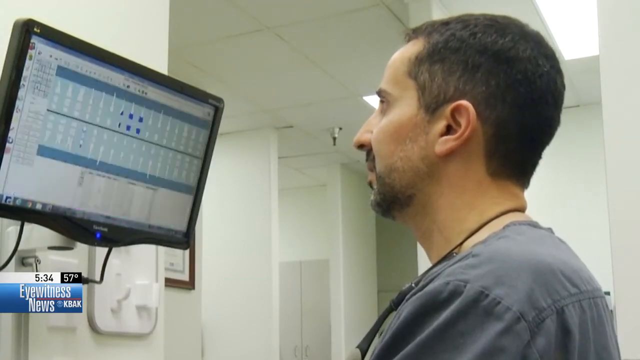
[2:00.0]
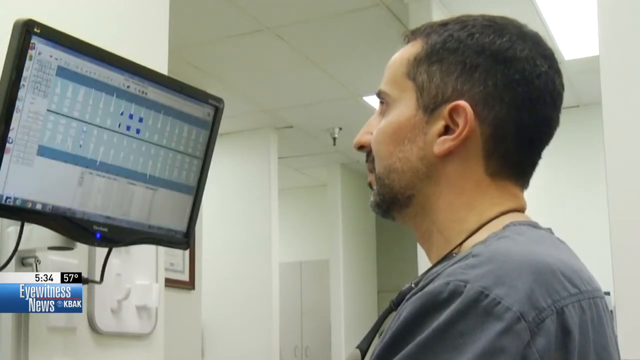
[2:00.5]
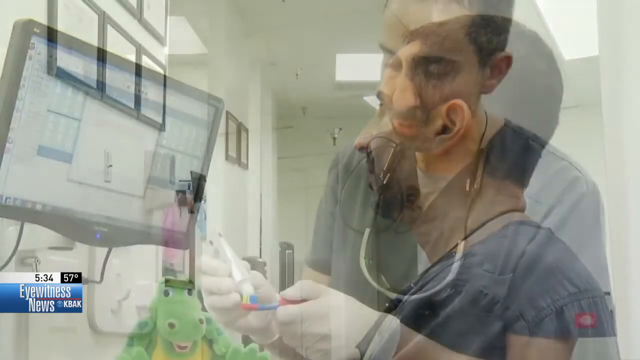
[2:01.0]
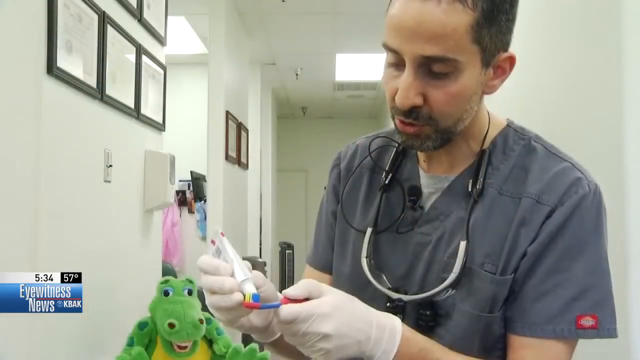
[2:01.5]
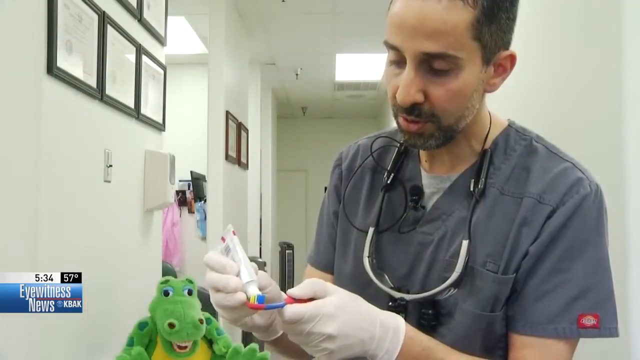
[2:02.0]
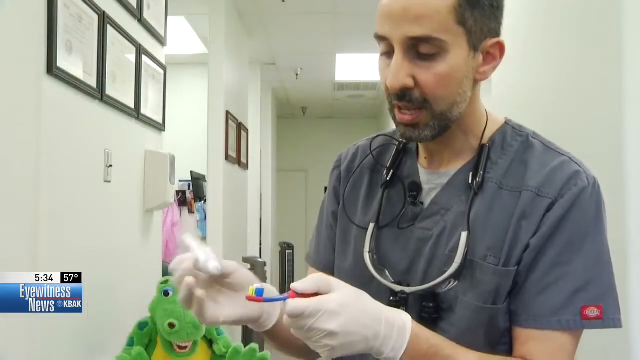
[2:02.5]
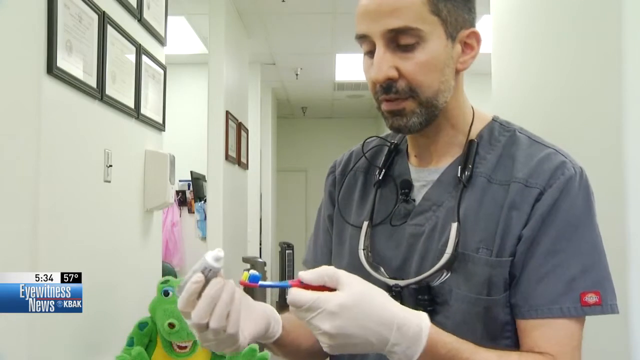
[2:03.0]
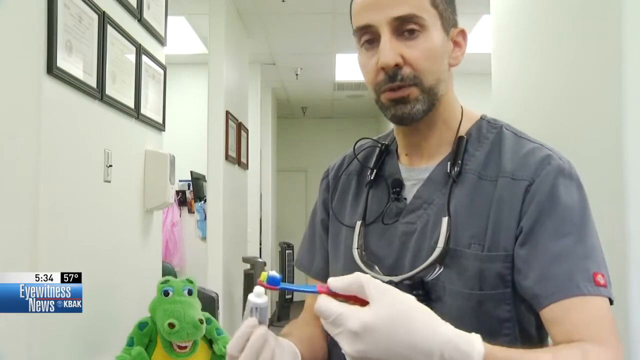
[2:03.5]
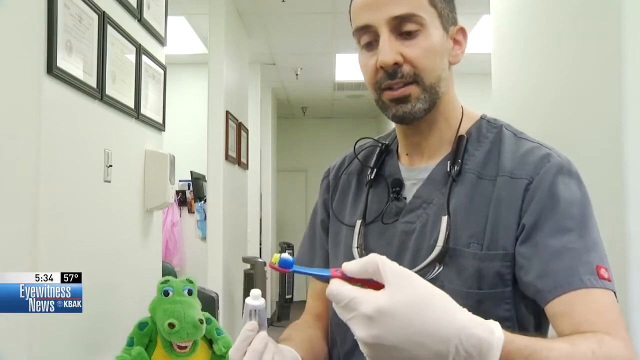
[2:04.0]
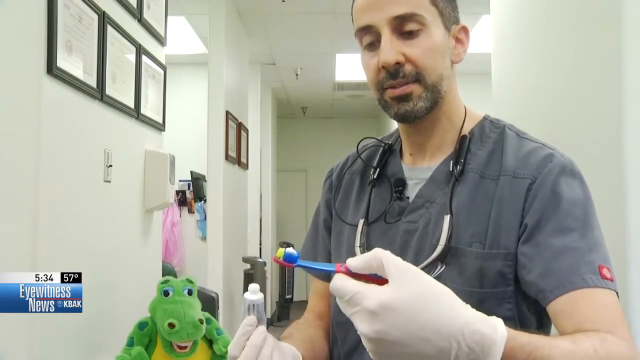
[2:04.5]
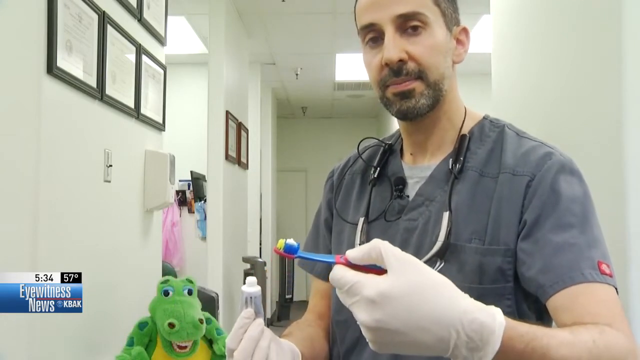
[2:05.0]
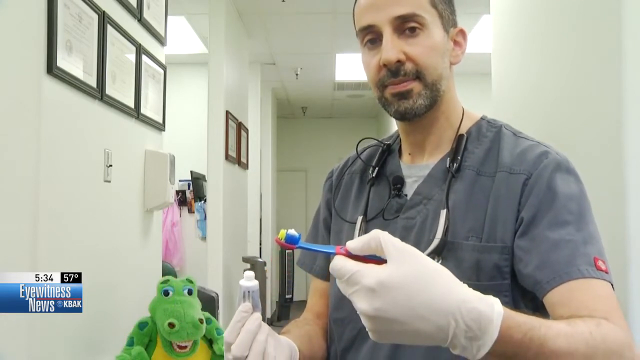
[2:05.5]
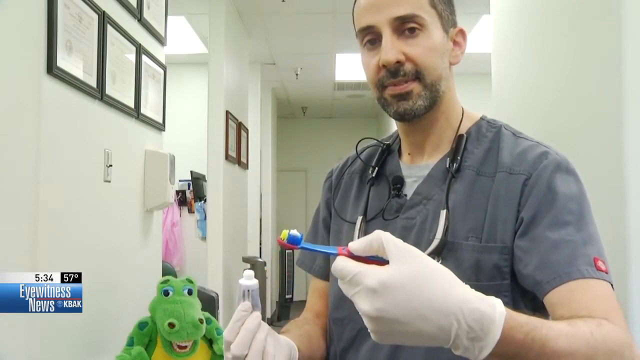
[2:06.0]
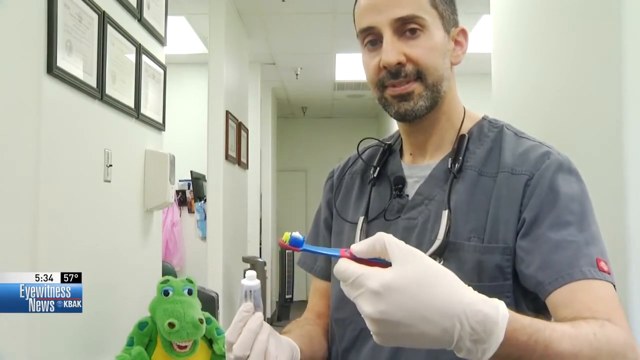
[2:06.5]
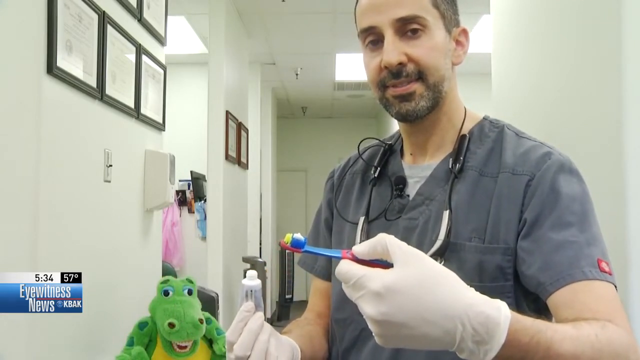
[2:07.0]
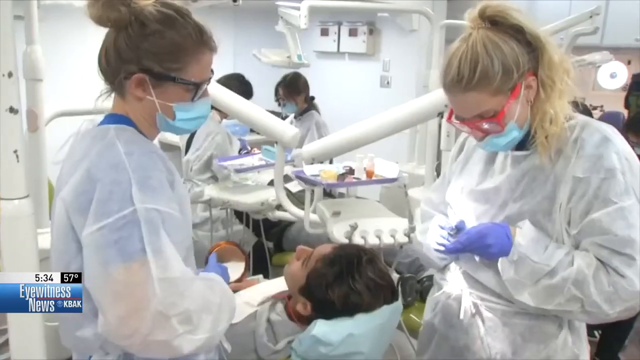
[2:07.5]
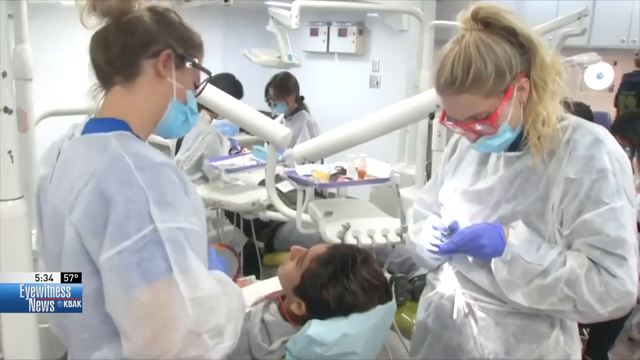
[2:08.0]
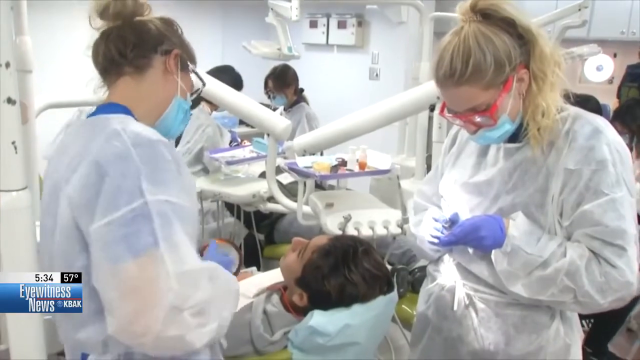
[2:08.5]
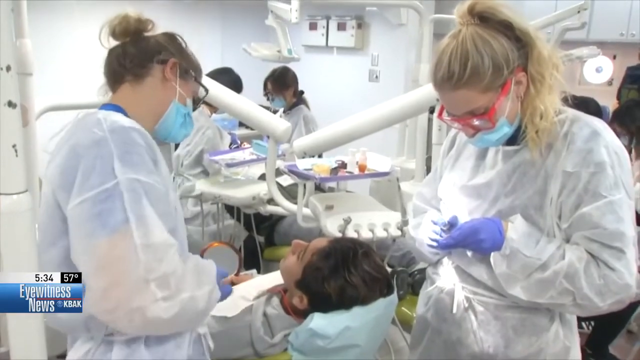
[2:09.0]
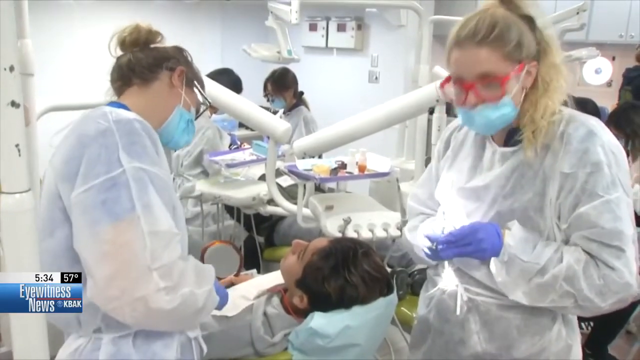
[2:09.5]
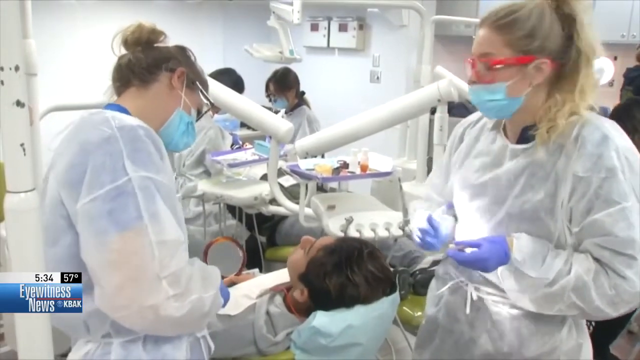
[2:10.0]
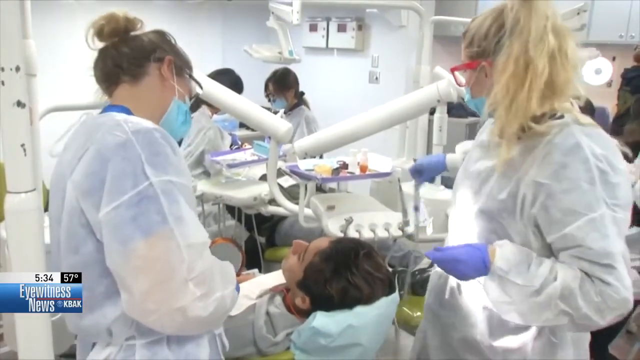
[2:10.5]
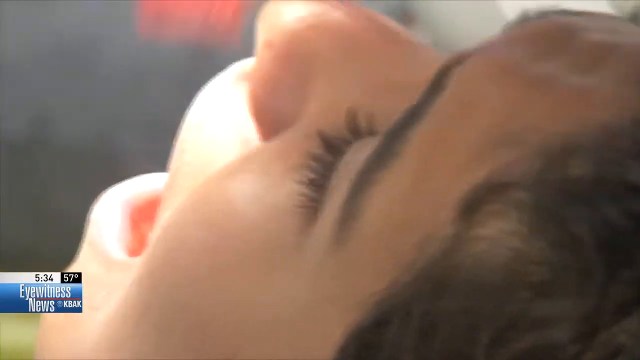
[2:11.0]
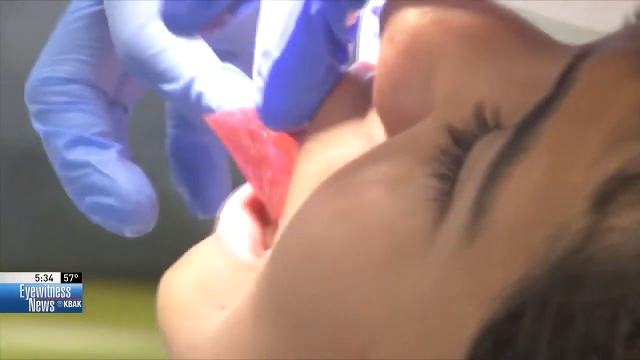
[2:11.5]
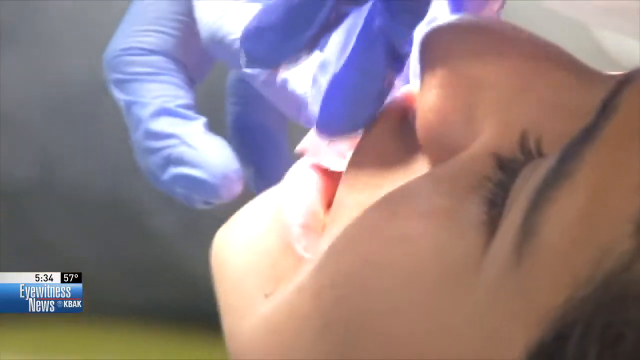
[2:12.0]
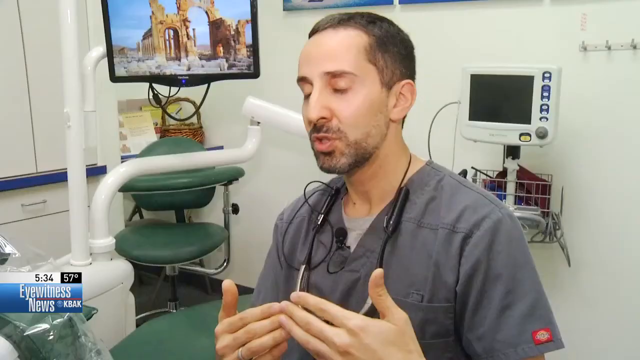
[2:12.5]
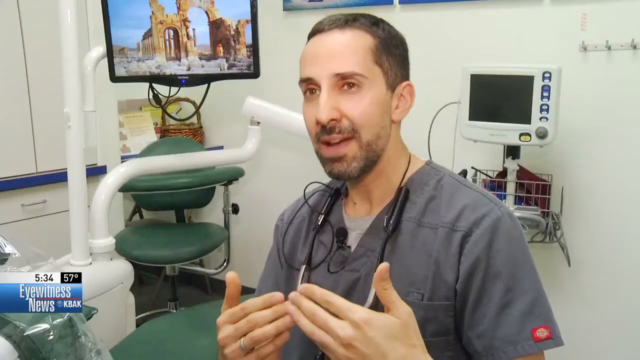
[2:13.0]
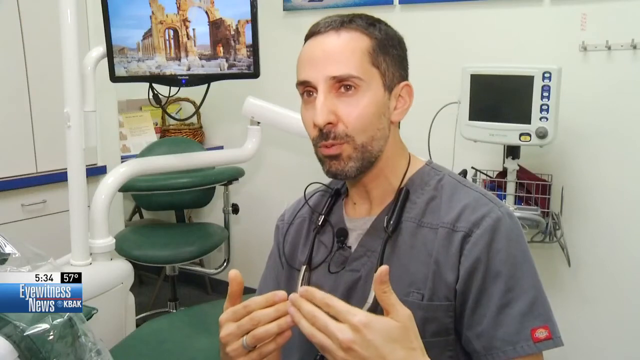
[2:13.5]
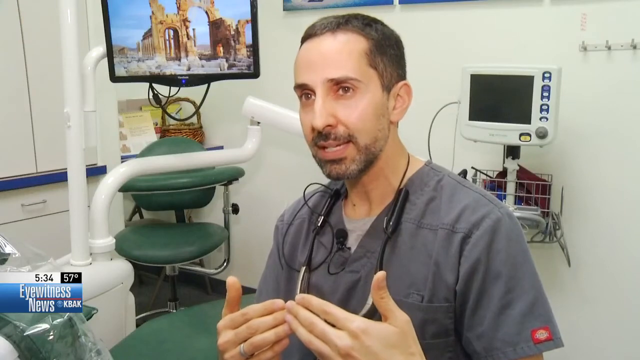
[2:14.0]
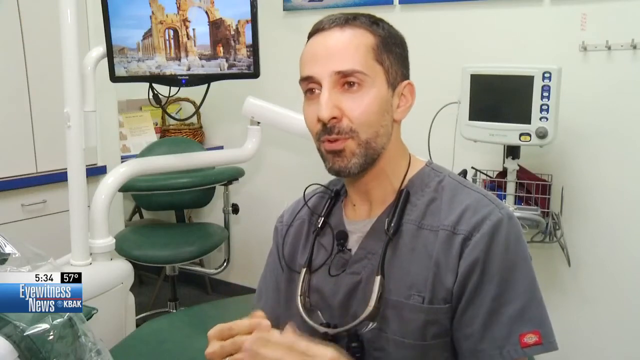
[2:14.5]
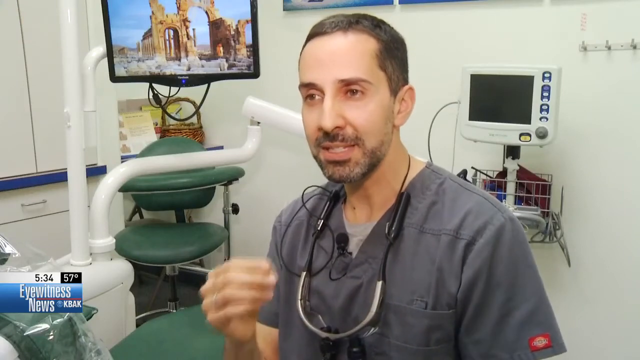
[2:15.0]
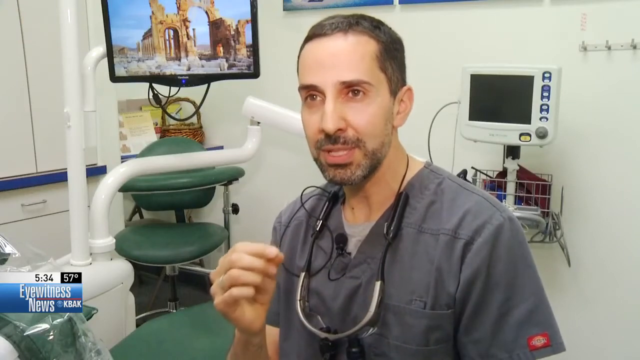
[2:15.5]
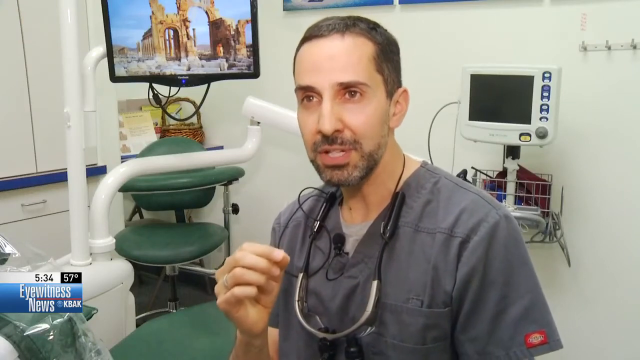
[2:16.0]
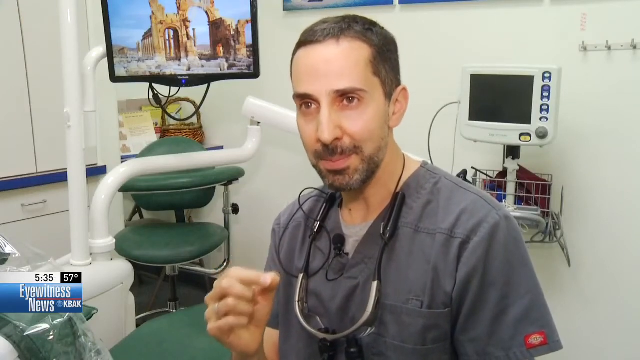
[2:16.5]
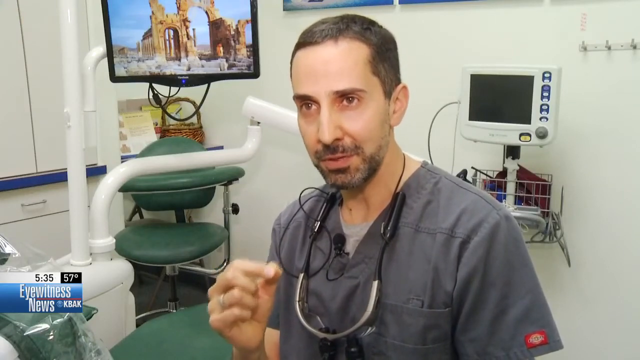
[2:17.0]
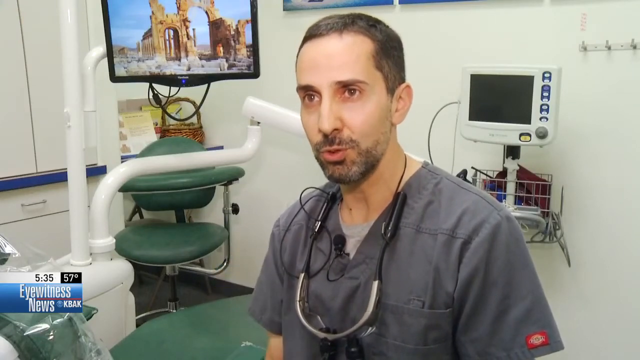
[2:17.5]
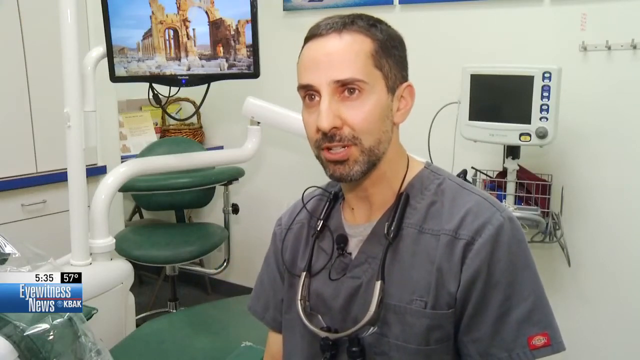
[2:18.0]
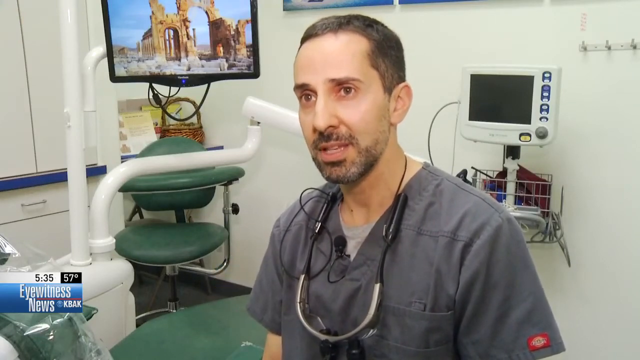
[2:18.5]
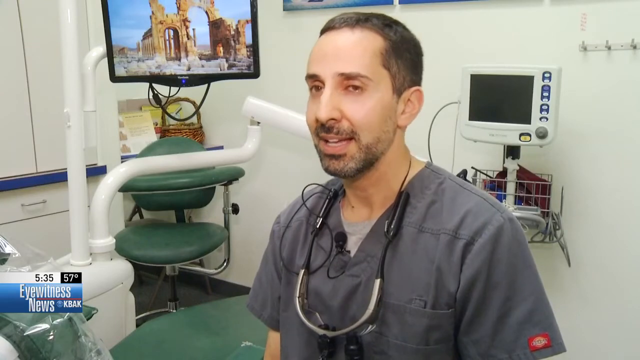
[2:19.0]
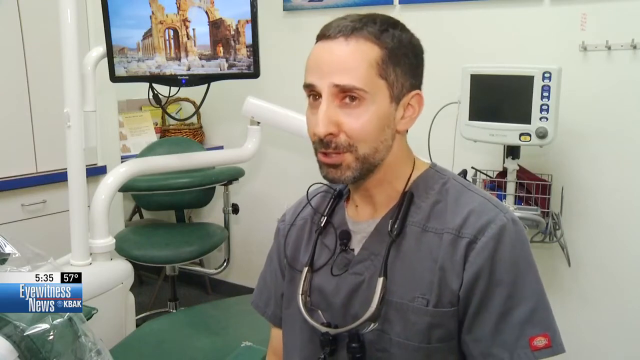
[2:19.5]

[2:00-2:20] A man looks at a monitor on the wall; the monitor, on the left side of the screen, shows dental records, and the man is in profile with his head angled slightly away. Then, seen from the elbows up, he holds a toothbrush and a tube of toothpaste while speaking to the camera. His left hand, wearing a white glove, holds the toothbrush up between his thumb and bent forefinger so the camera can see it, and his right hand holds the toothpaste tube slightly lower, opening facing upward. He turns the toothbrush slightly toward the camera so the toothpaste is more visible. Next, a room shows a patient lying on a dental chair with two people standing on either side of him, both wearing surgical masks; one has her hands raised with elbows bent. Then, from behind and at an angle, a child's head is seen with the mouth open as a person places an object into it. Finally, a man speaks to the camera, gesturing with his right hand, fingers pinched, his fist shaking slightly up and down.